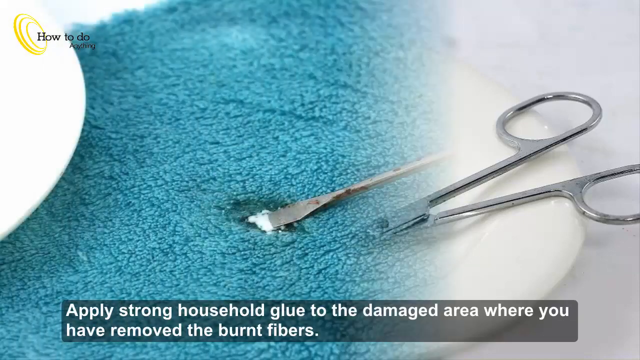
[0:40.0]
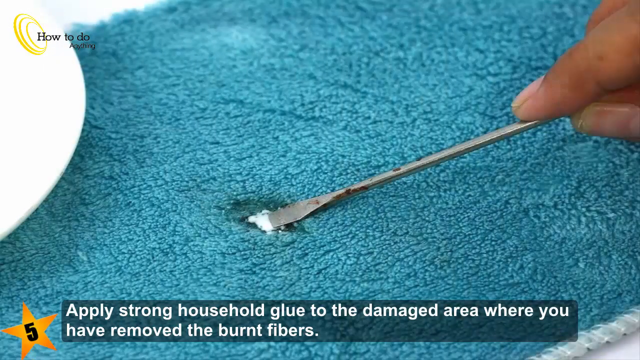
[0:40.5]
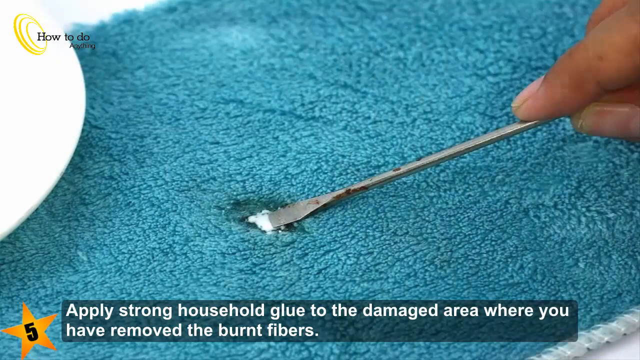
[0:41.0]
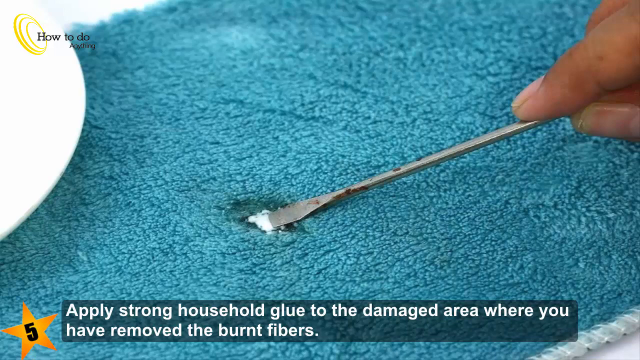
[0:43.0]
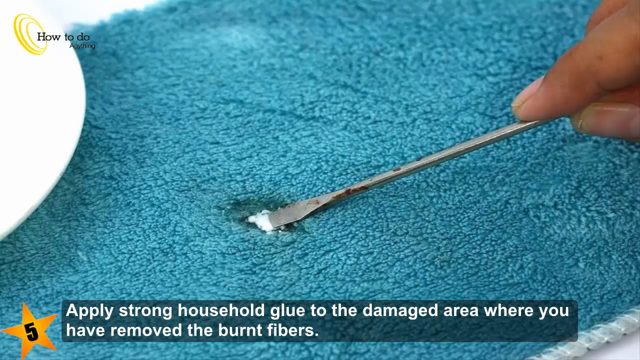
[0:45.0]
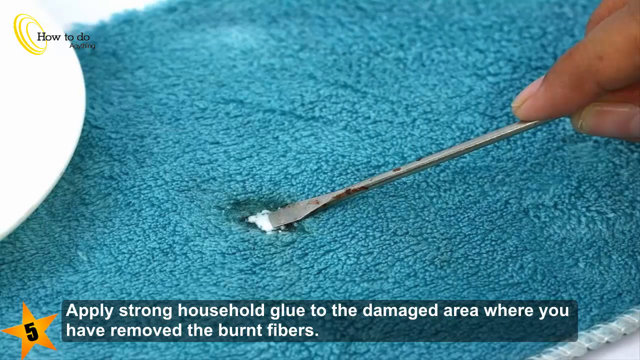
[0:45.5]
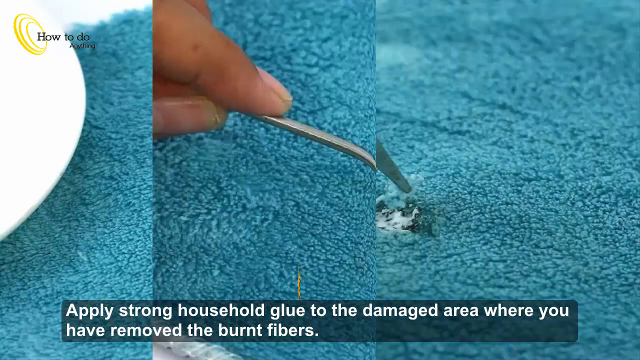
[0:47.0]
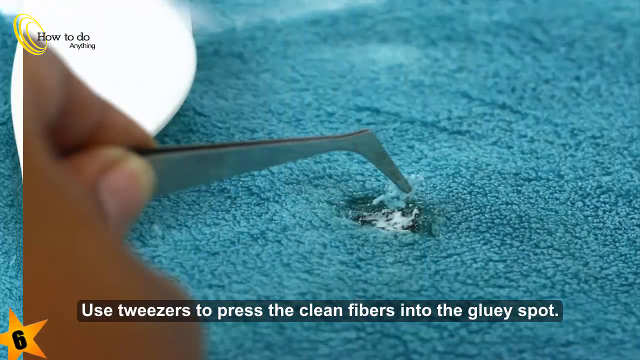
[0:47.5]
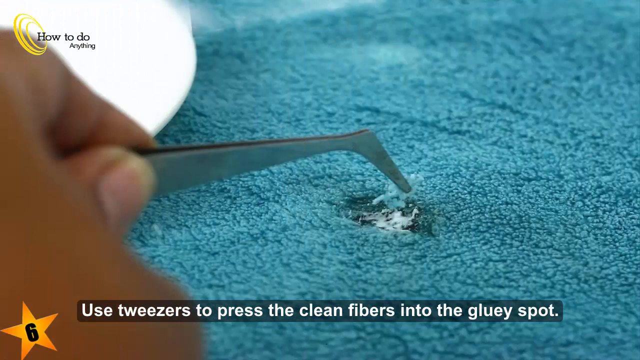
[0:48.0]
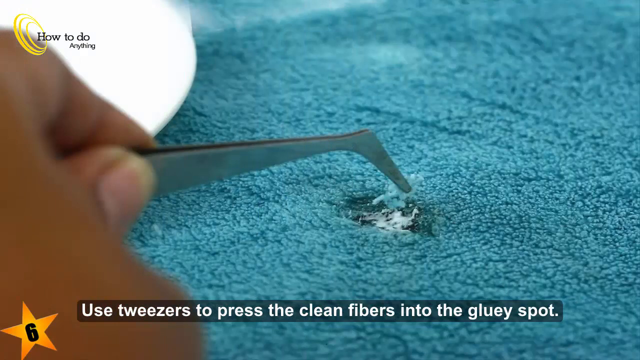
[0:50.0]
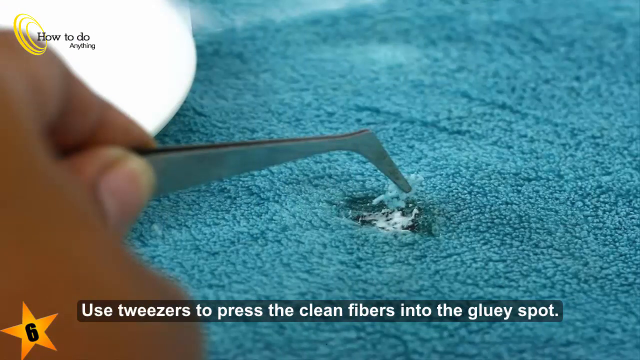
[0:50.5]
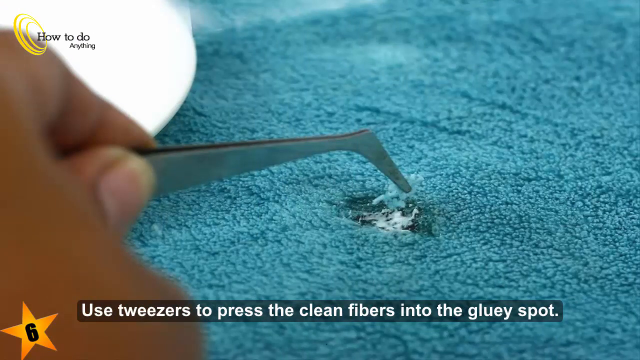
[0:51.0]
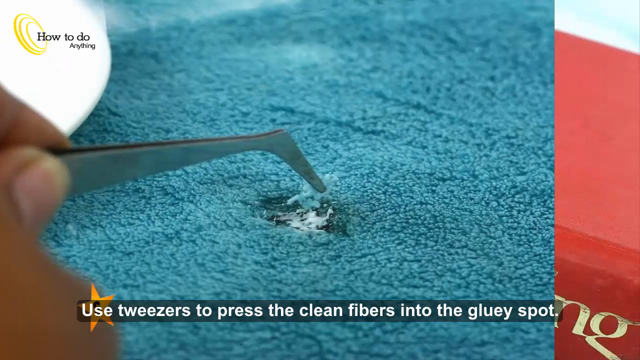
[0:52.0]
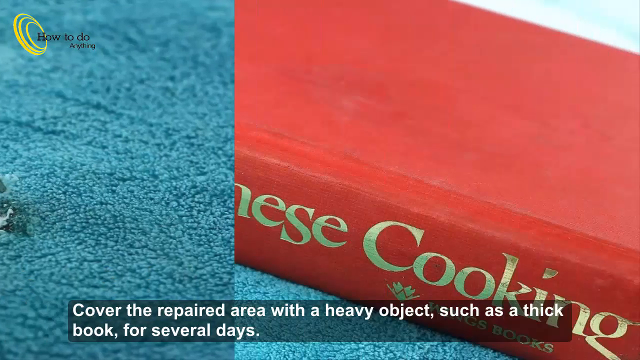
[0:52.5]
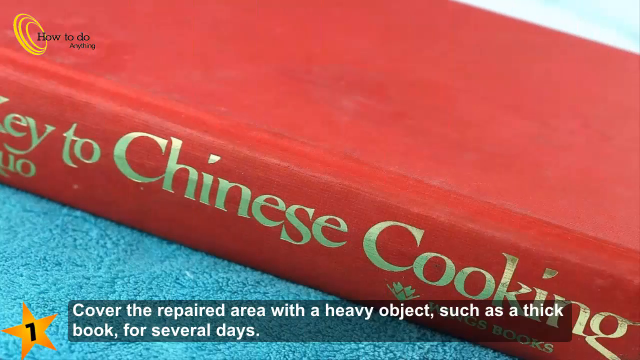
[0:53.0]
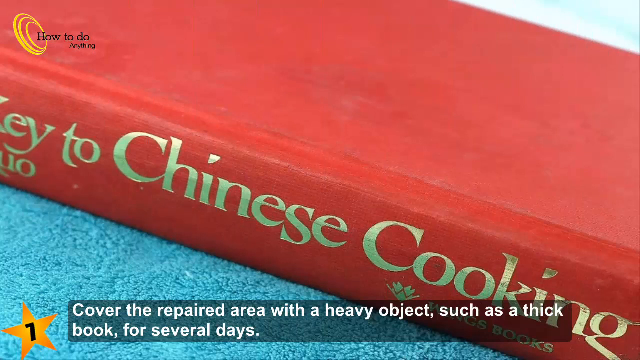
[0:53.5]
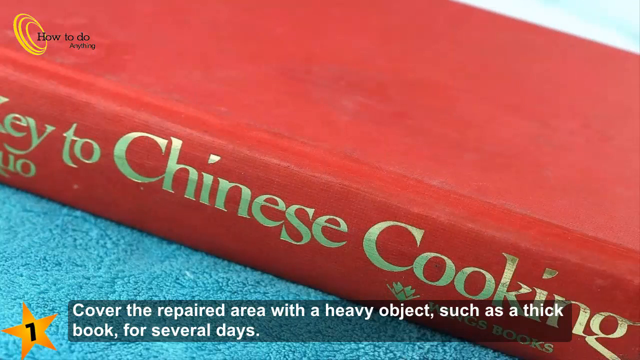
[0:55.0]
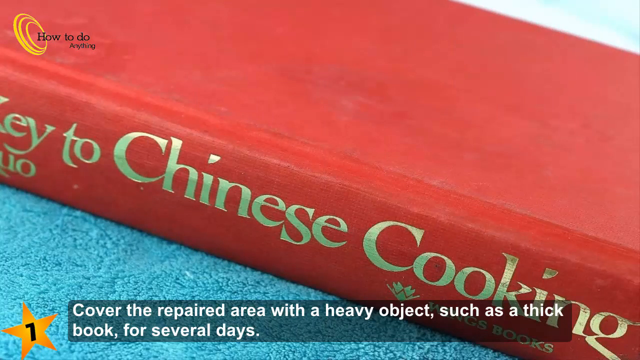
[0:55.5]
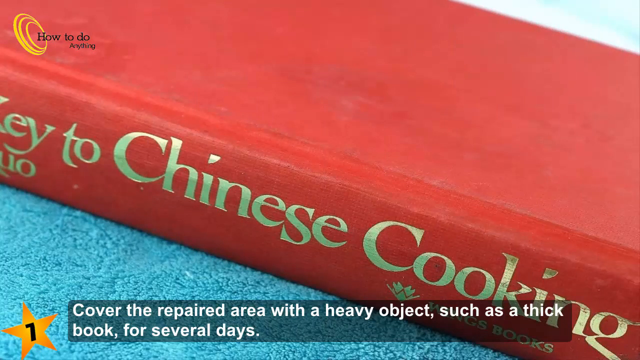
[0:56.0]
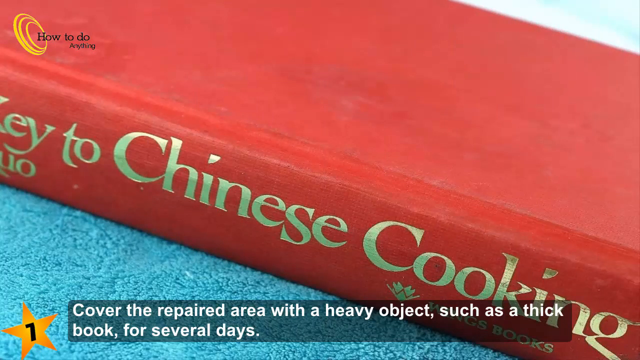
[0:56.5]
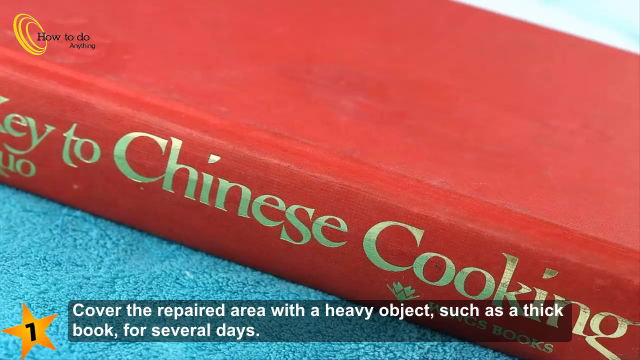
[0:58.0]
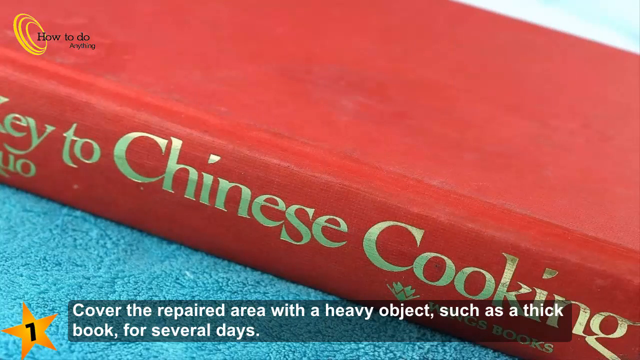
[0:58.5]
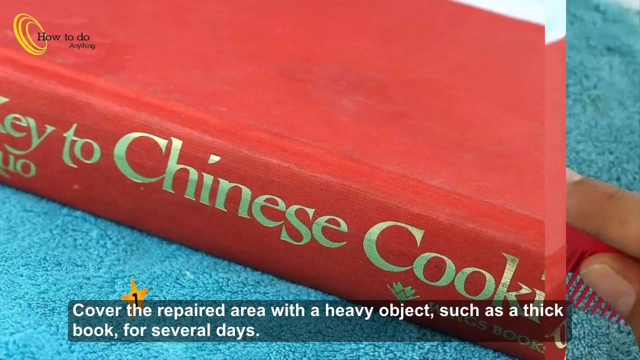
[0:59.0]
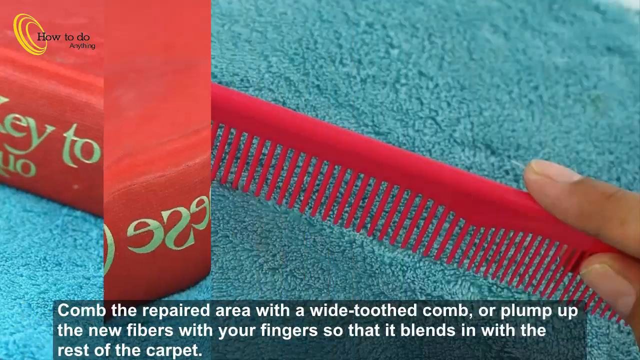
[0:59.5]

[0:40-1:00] Using tweezers, strong glue is put on the part where the black stain was. A Chinese cookbook is shown, with "key to Chinese cooking" written on it. A red comb is held over the part where the black stain was. The glue is applied to the stained area with tweezers, and at one point only the glue is shown. Then the tweezers press the cut clean fibers into the glue on the stained part.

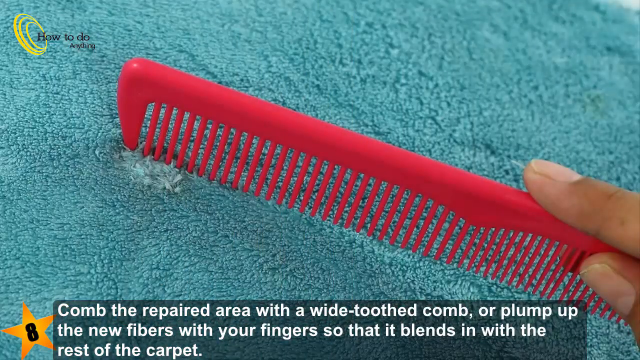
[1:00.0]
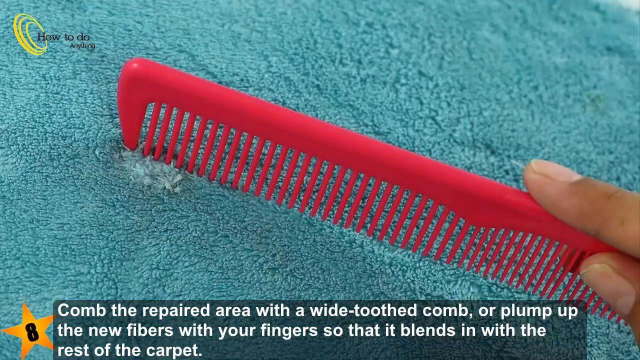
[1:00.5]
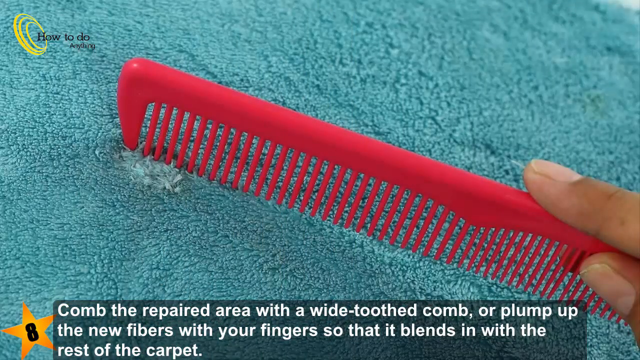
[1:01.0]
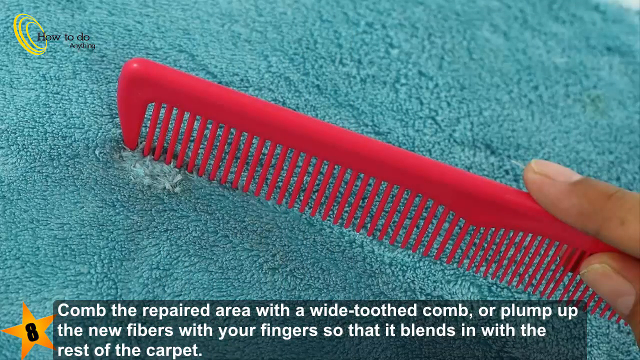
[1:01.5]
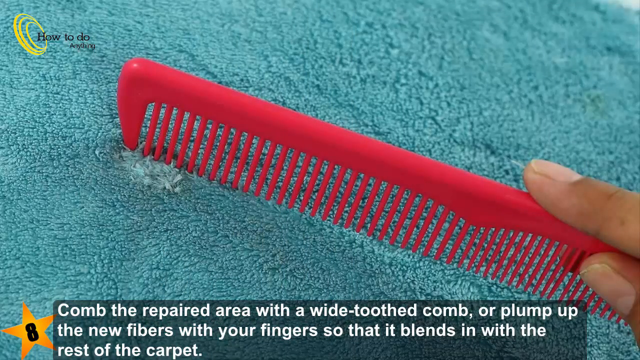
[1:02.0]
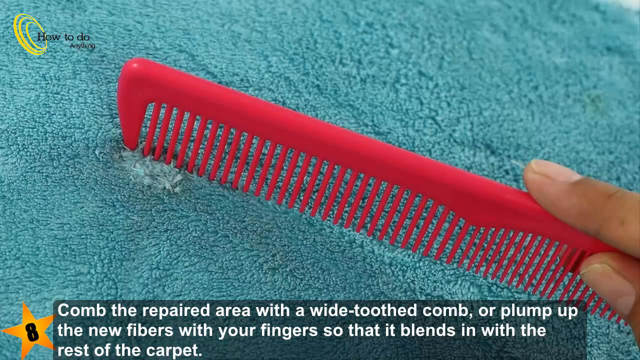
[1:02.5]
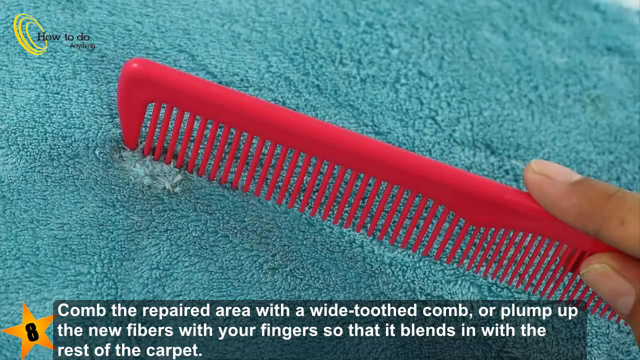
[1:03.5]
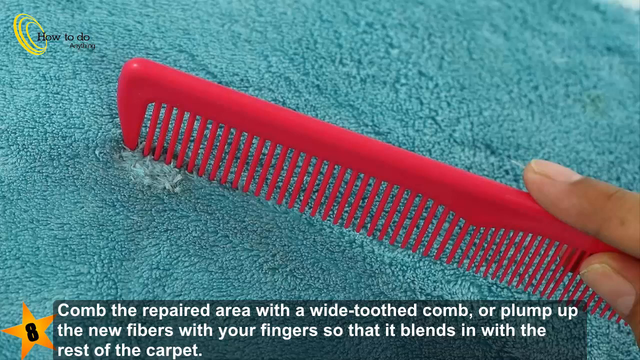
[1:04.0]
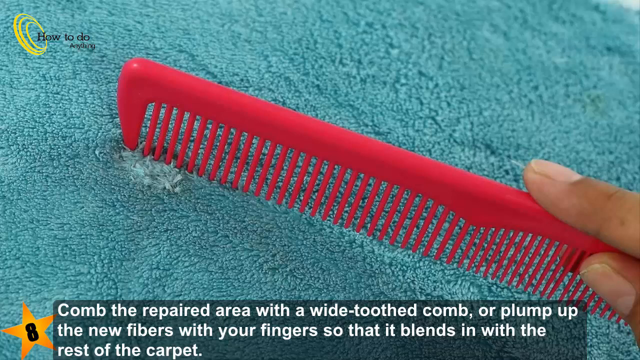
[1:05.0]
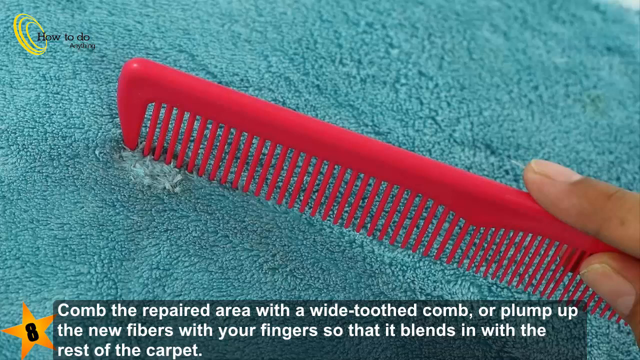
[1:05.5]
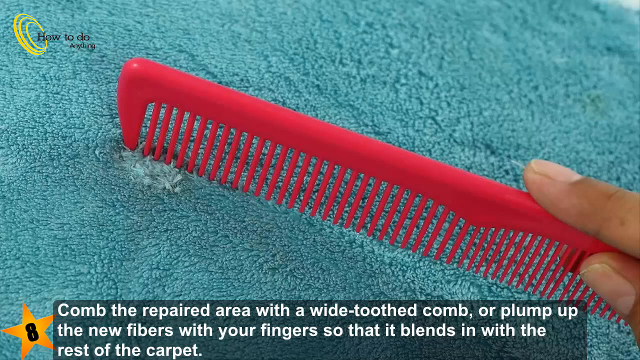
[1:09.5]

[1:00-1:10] The red comb is used on the repaired area, and text underneath indicates that the new fiber can be plumped up with the fingers so that it blends in with the carpet. The comb is rubbed repeatedly over the area where the new clean fibers were glued. As the rubbing continues, the stain disappears and is covered by the new blue fibers that were cut with the scissors and glued onto the stained part.